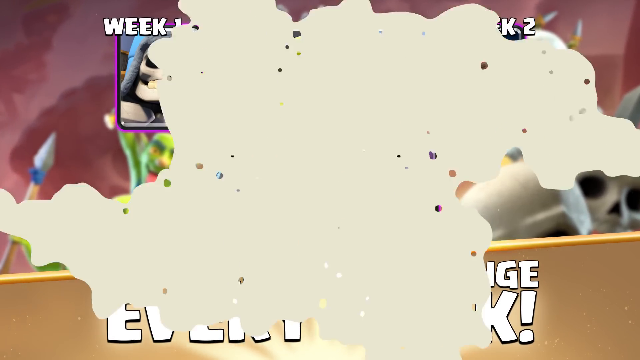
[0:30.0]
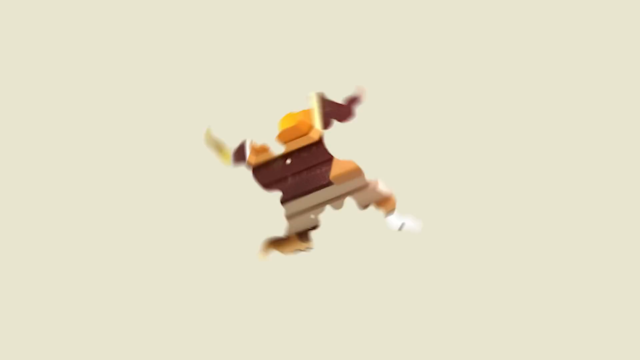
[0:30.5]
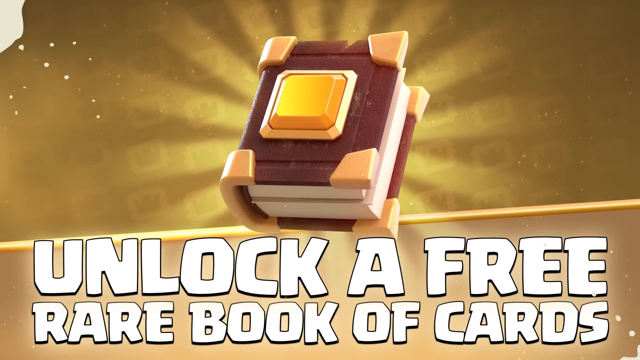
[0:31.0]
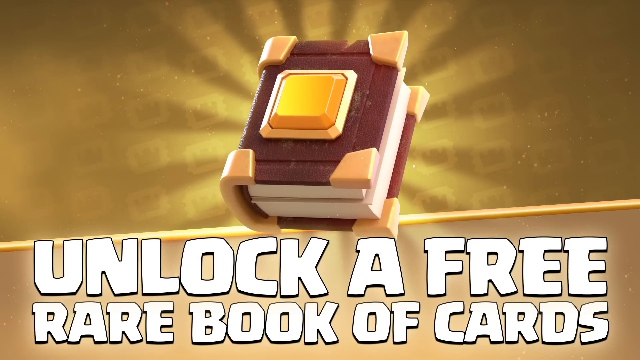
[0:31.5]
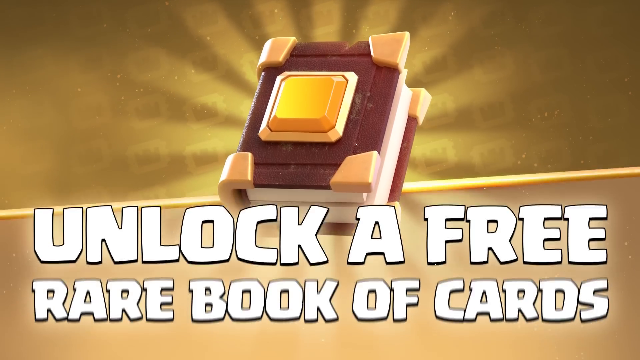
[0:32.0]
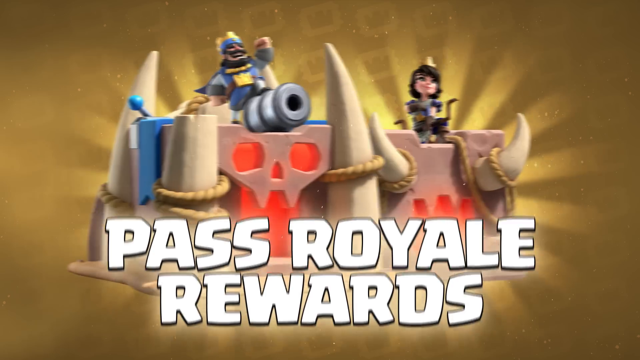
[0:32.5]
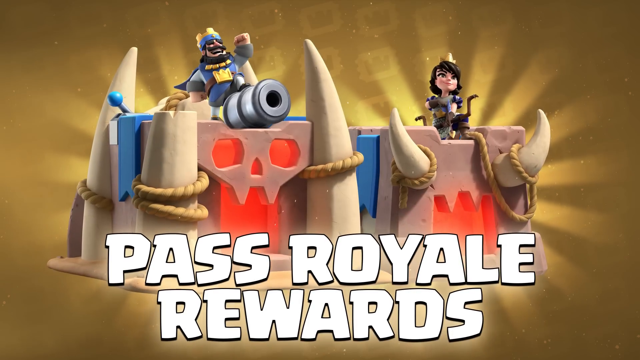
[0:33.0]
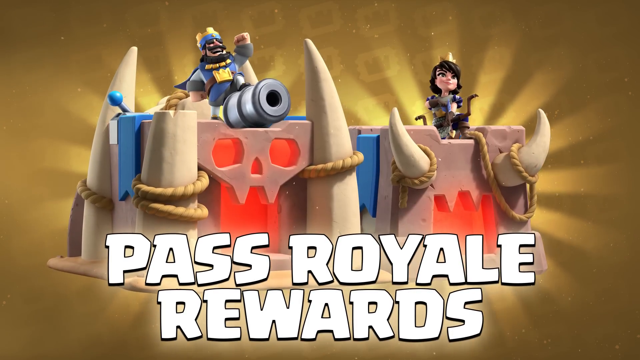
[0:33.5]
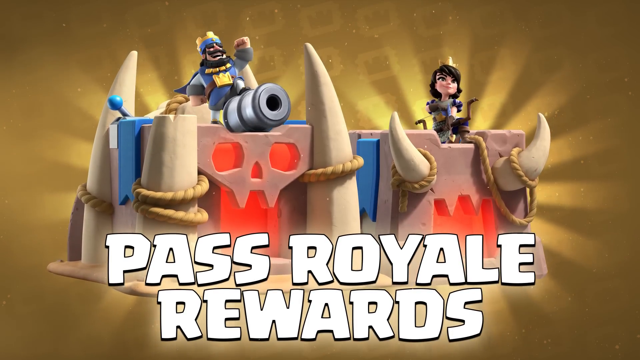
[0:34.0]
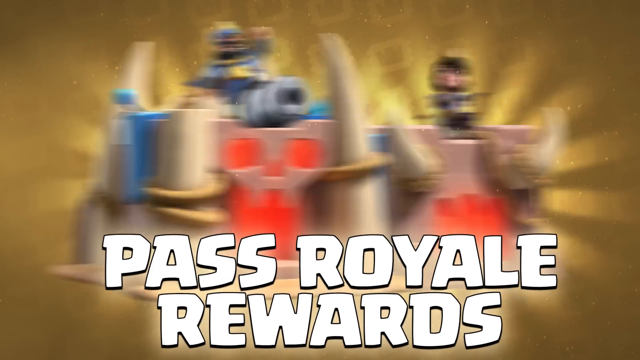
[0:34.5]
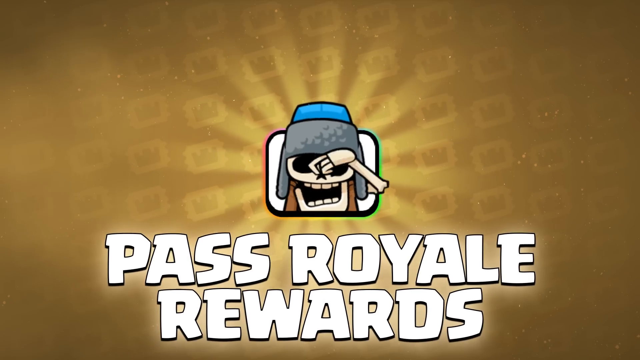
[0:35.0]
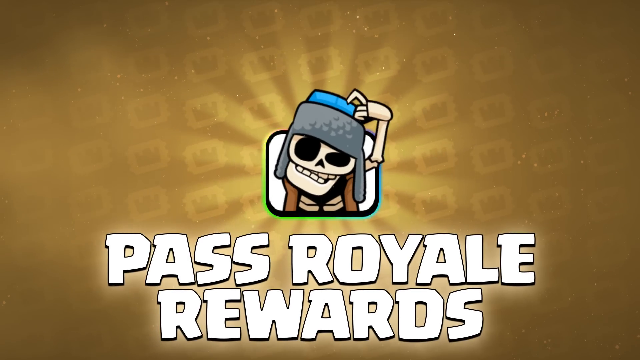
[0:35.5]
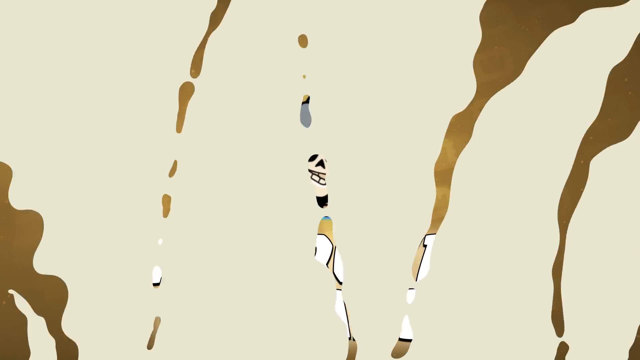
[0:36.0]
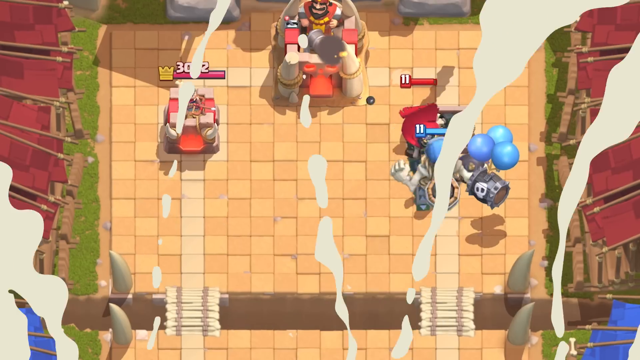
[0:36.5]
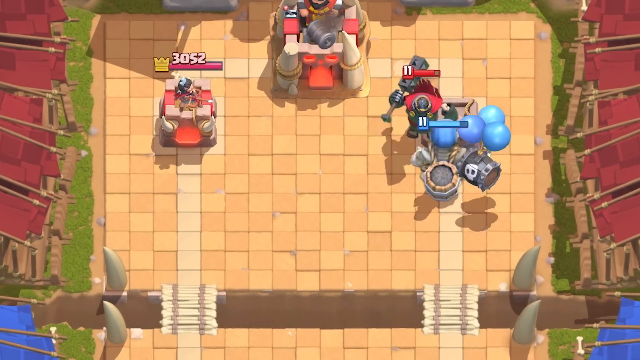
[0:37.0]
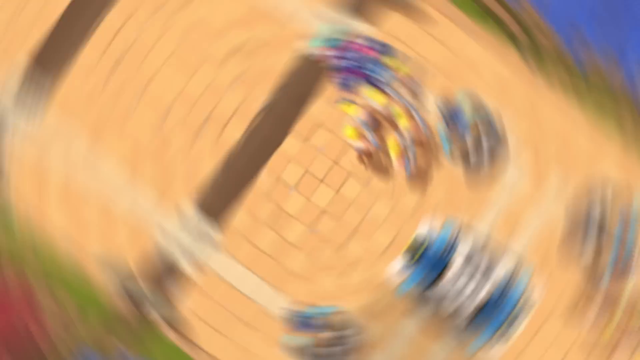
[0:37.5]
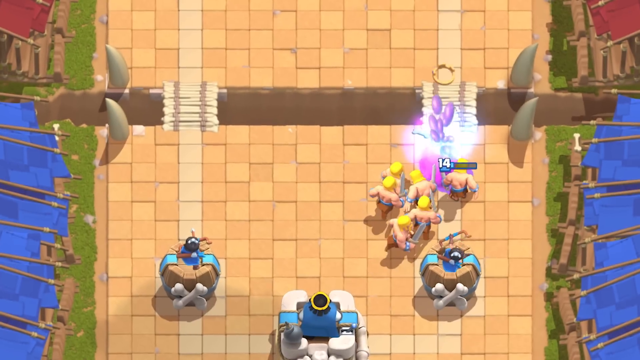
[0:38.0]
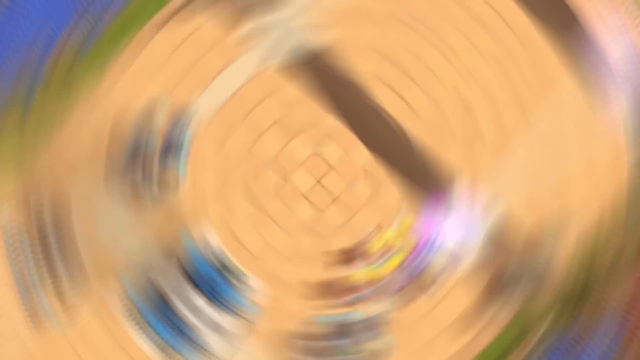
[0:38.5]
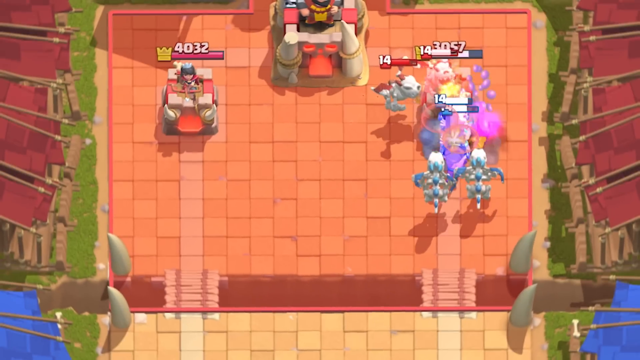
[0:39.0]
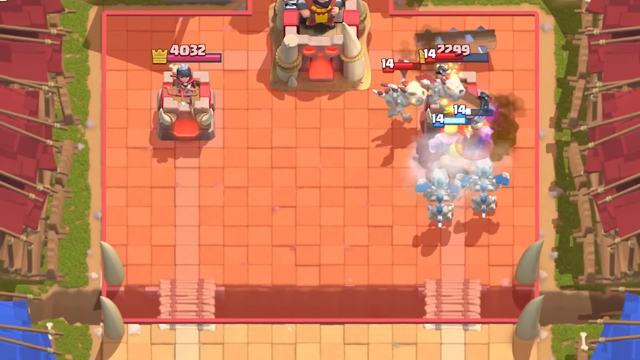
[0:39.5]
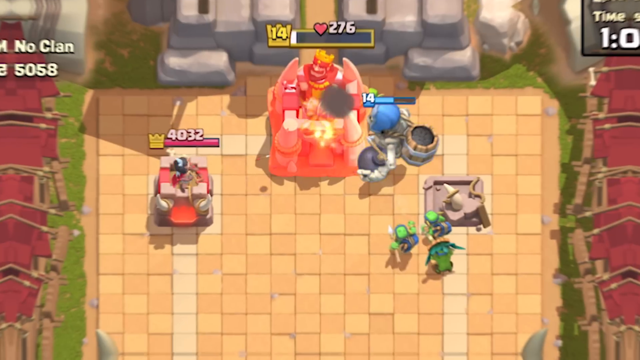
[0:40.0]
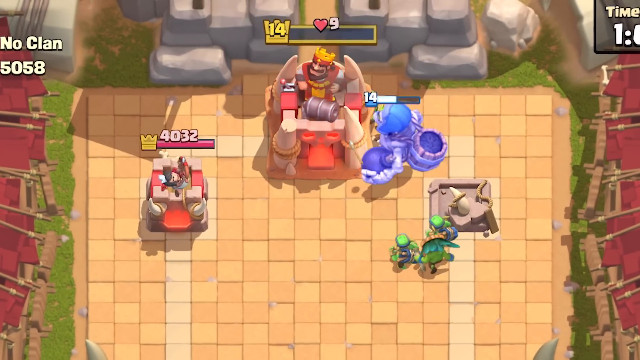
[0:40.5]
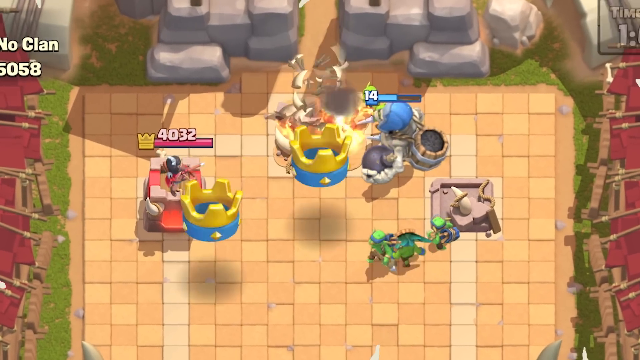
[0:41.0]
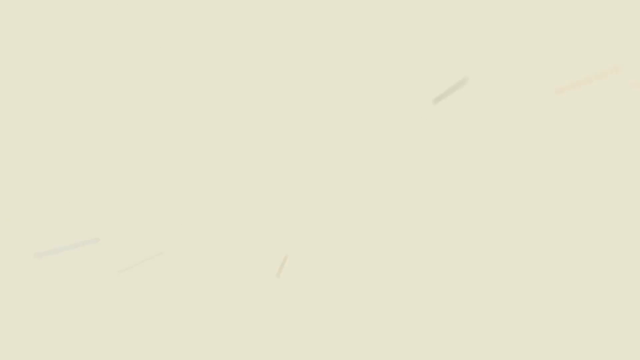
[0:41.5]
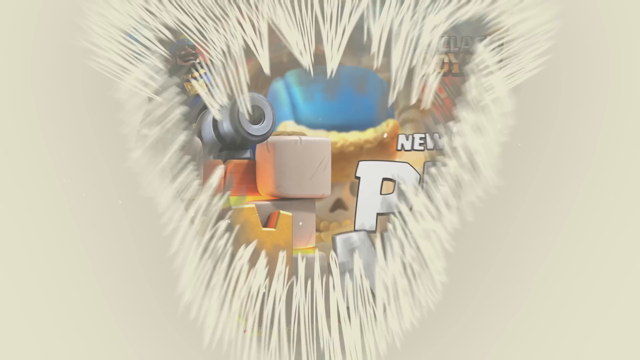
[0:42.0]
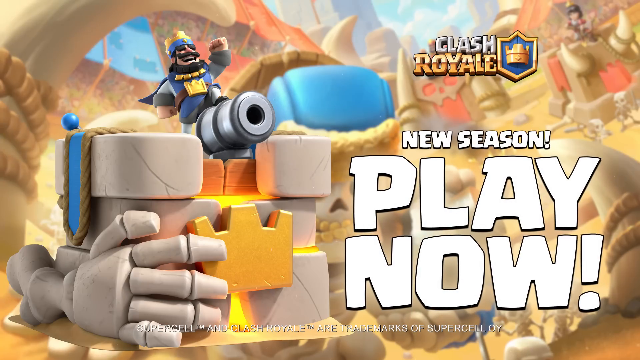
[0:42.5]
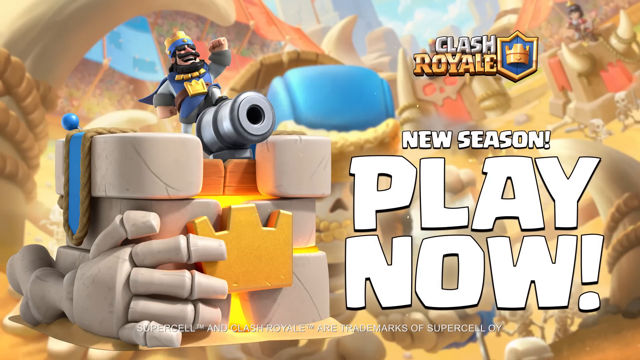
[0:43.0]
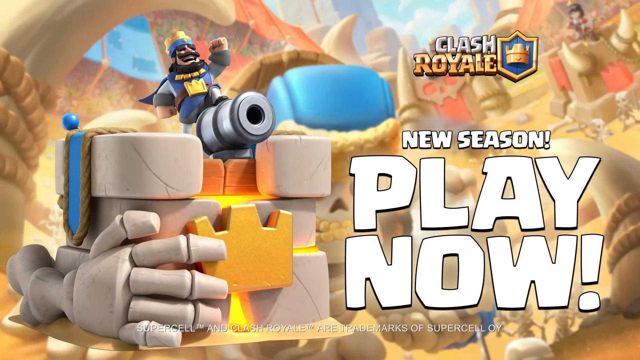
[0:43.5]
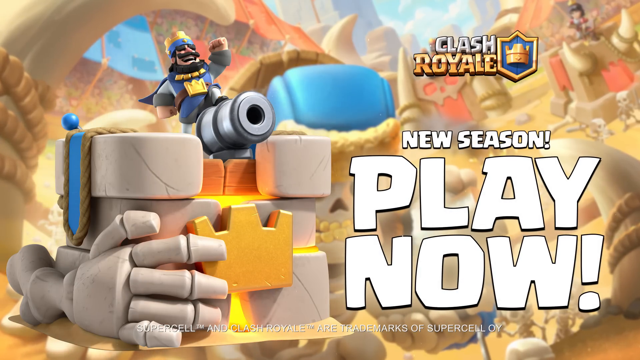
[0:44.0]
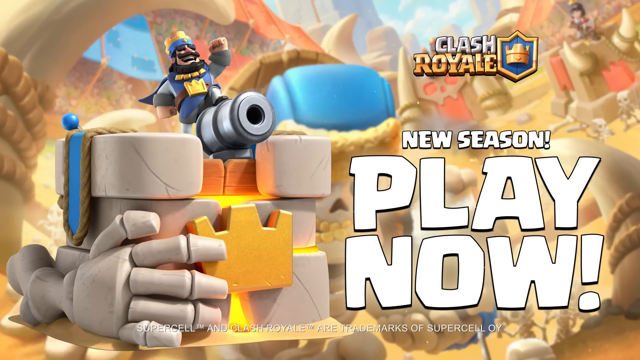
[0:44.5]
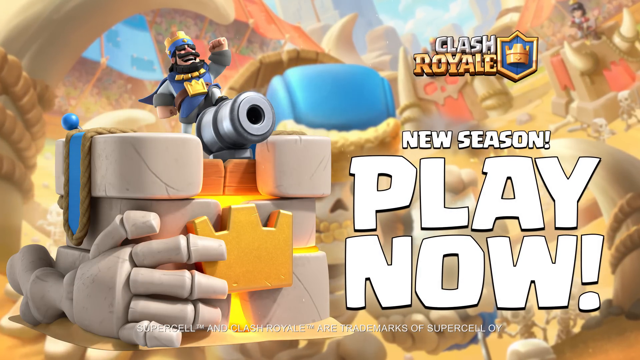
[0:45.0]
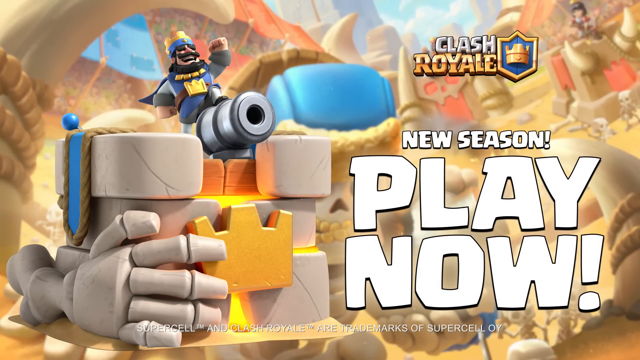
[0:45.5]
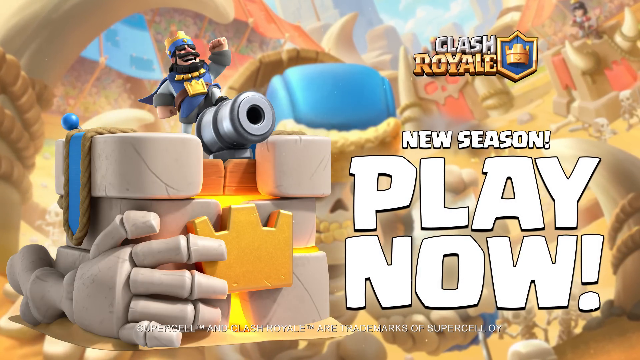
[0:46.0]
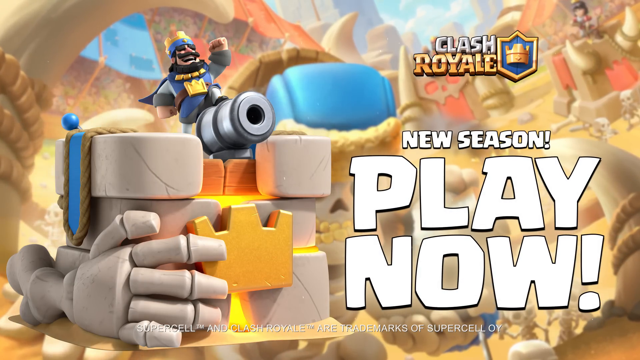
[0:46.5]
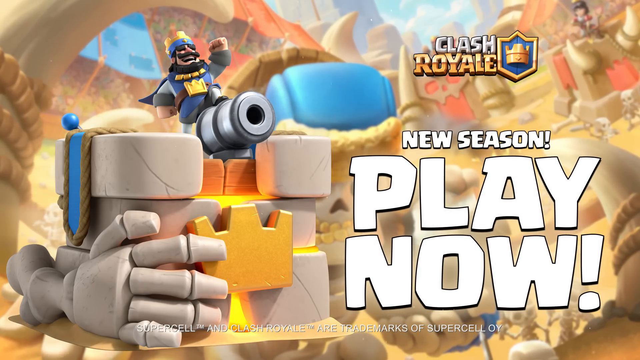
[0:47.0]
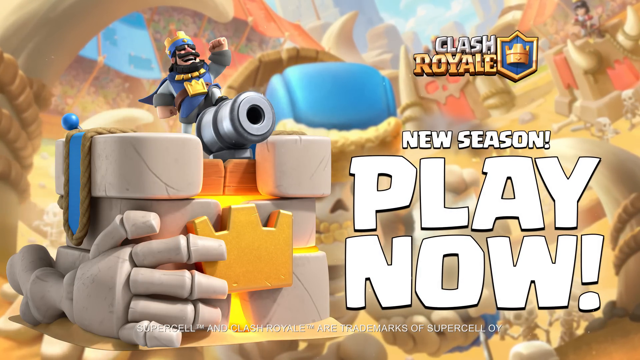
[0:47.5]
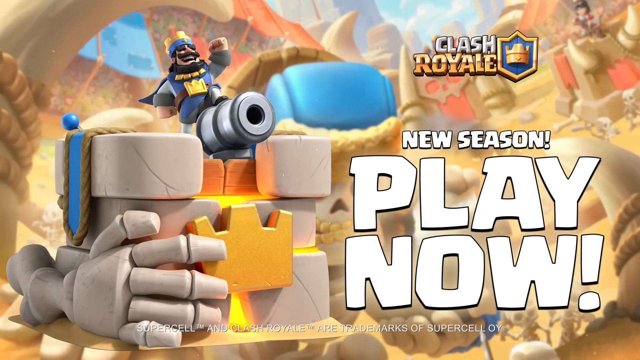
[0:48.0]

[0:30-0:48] An advertisement shows how to gain rewards from the Royale Pass for Clash Royale. Video game characters are used in a thematic way, with two characters sat on top of a cave-like entrance and flashing gold lights behind them. The video transitions to another rewards emote in the middle of the screen: a skull character wearing a thematic hat. Next comes a look at the new changes coming to the game, with clips of actual gameplay showing the player characters beating the AI-controlled bosses. A transition leads to a static visual advertisement with a Clash Royale logo and an emote, and large text stating that a new season is coming into play now. The last advertisement shows a male character model using a cannon while at the top of a large wall.